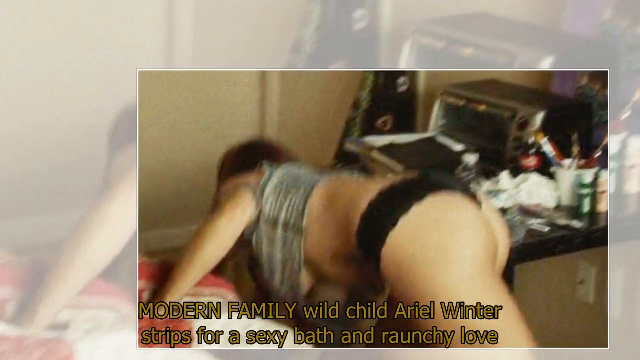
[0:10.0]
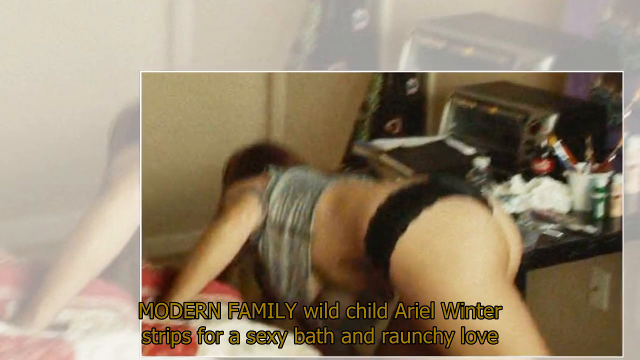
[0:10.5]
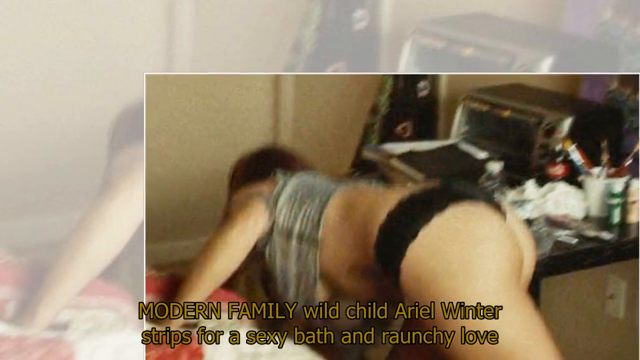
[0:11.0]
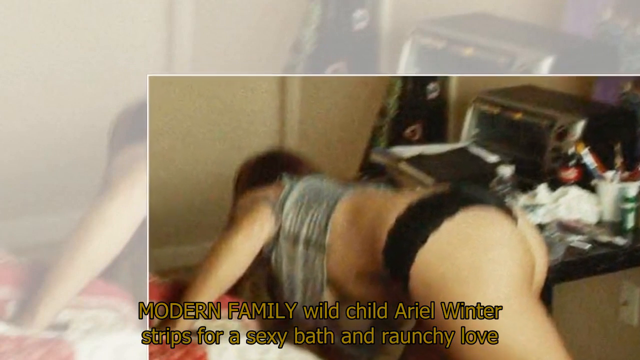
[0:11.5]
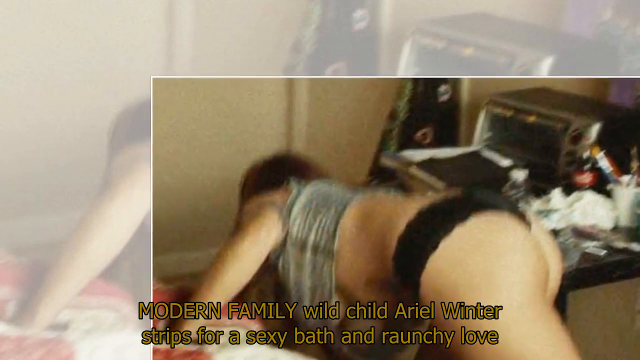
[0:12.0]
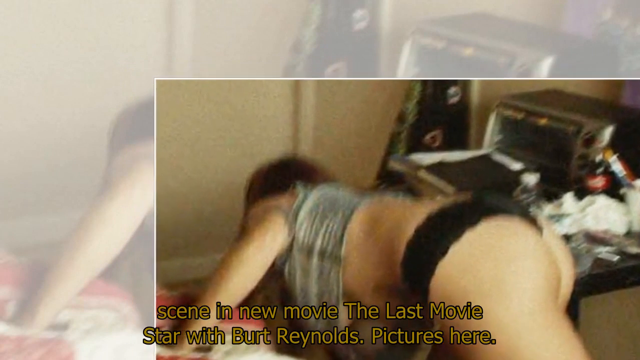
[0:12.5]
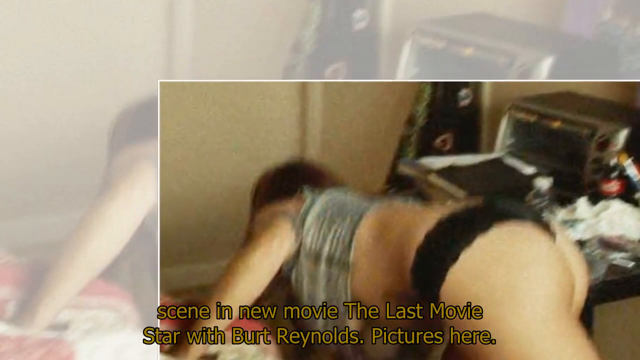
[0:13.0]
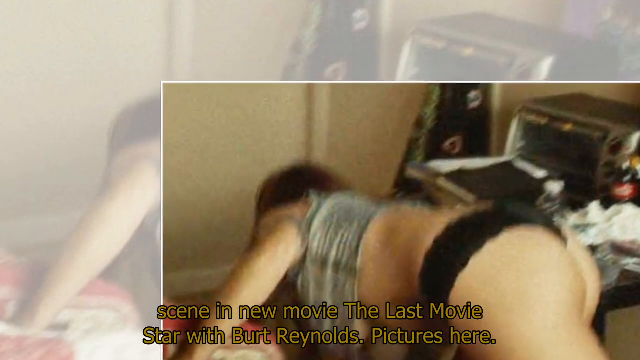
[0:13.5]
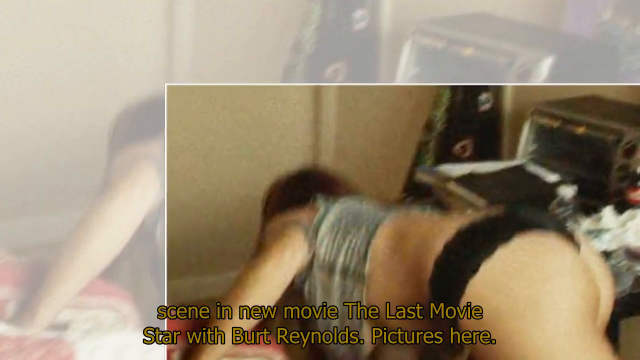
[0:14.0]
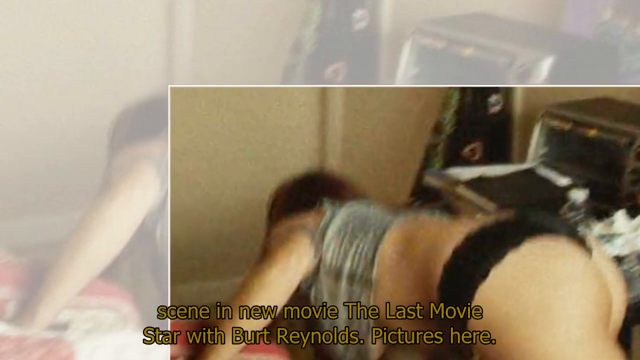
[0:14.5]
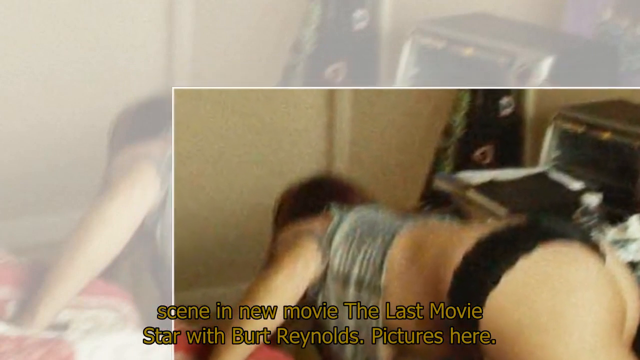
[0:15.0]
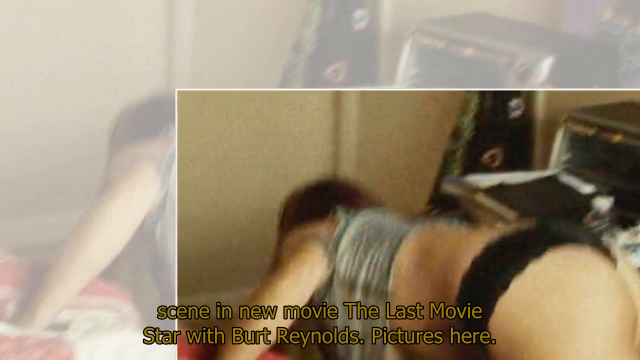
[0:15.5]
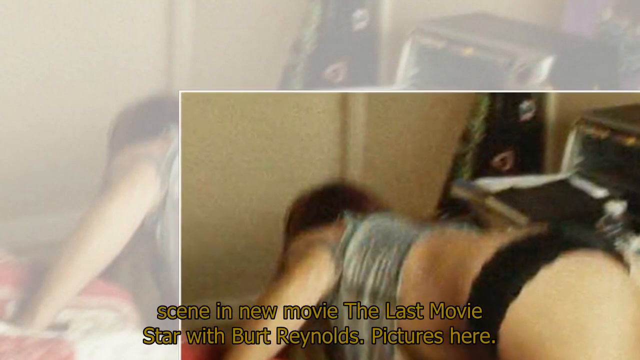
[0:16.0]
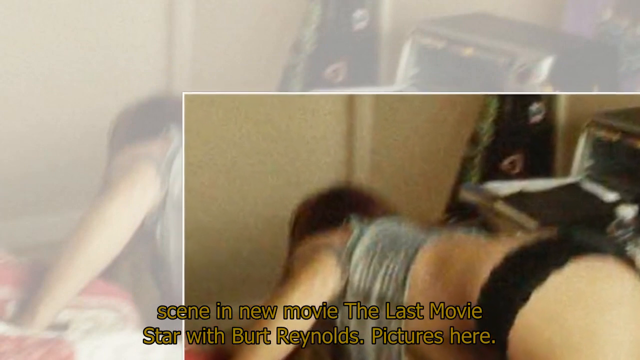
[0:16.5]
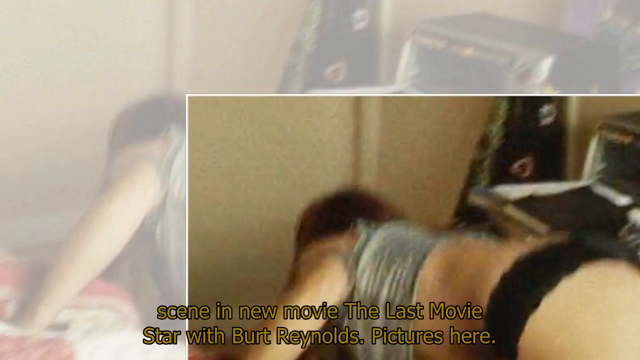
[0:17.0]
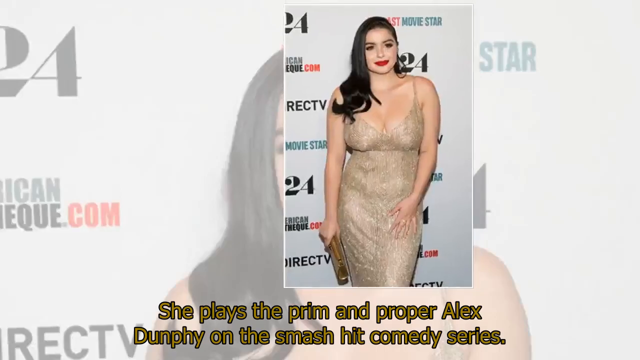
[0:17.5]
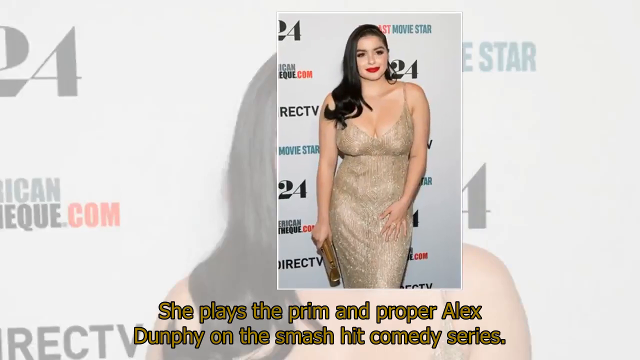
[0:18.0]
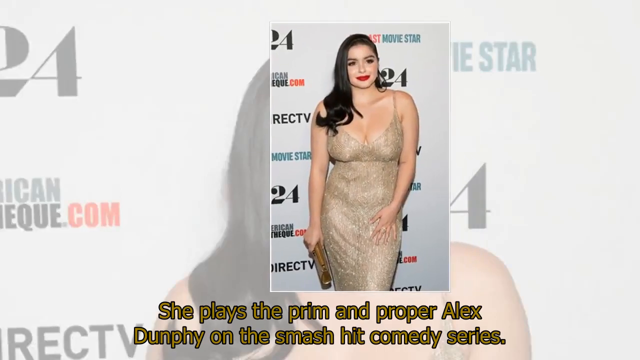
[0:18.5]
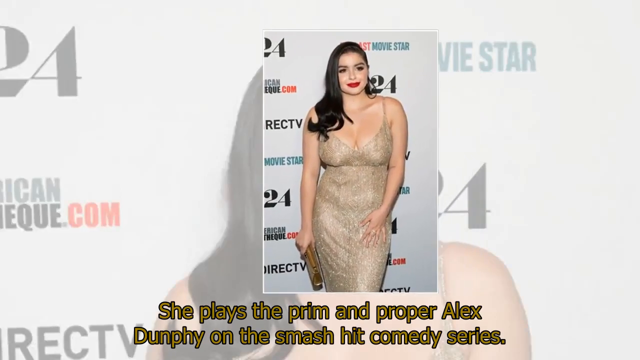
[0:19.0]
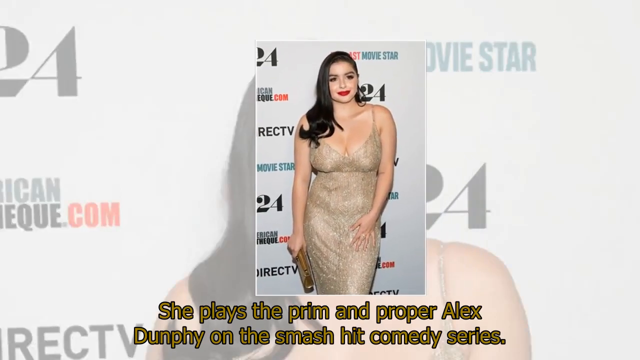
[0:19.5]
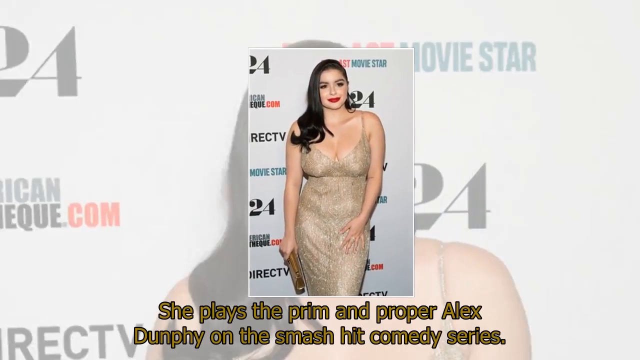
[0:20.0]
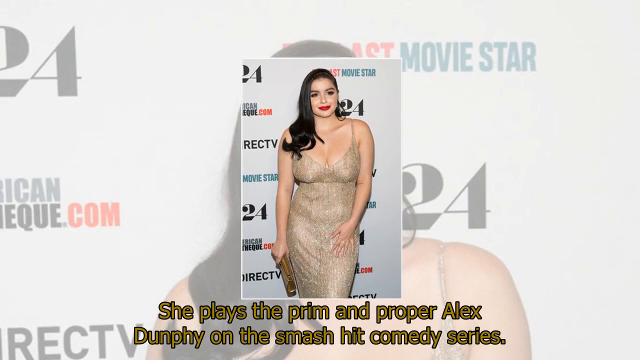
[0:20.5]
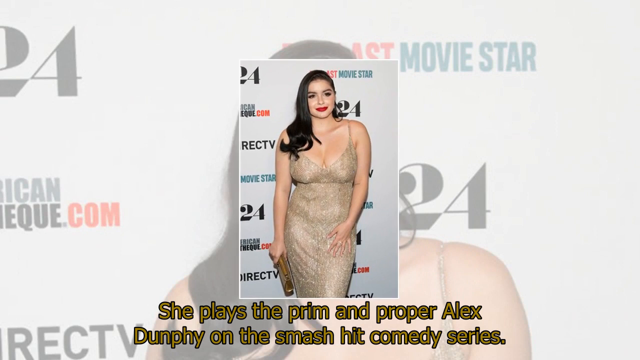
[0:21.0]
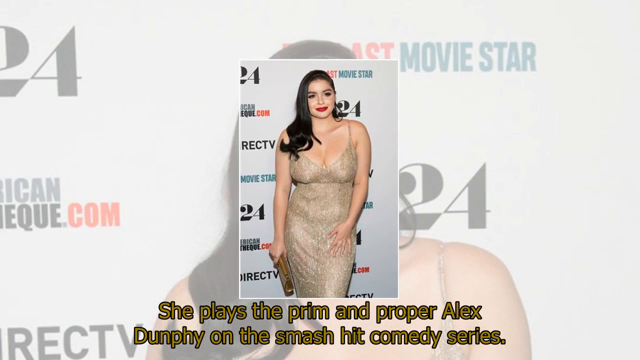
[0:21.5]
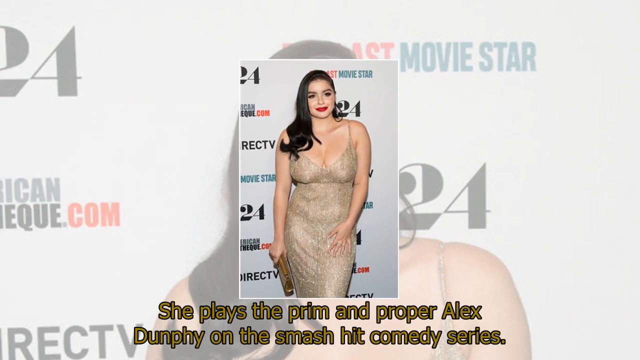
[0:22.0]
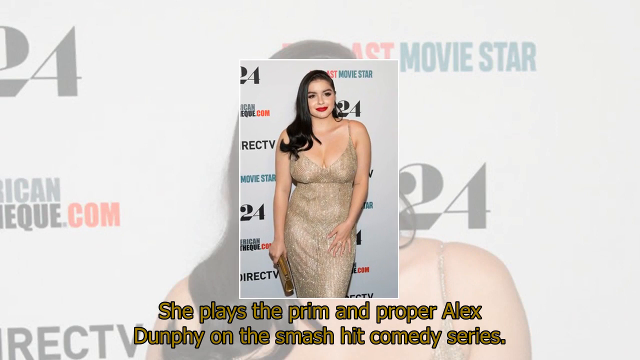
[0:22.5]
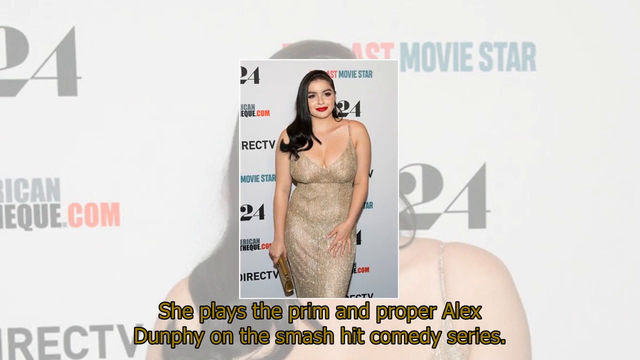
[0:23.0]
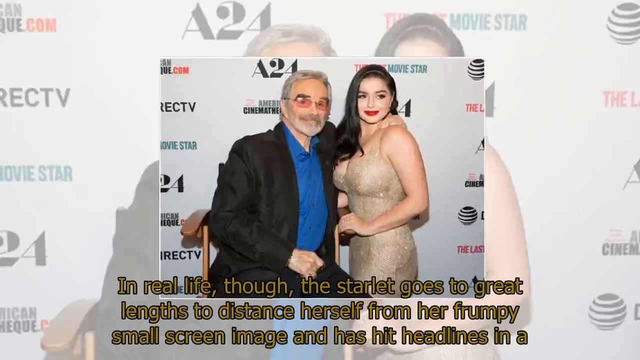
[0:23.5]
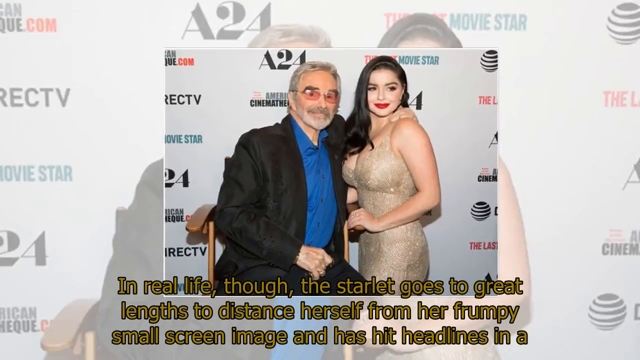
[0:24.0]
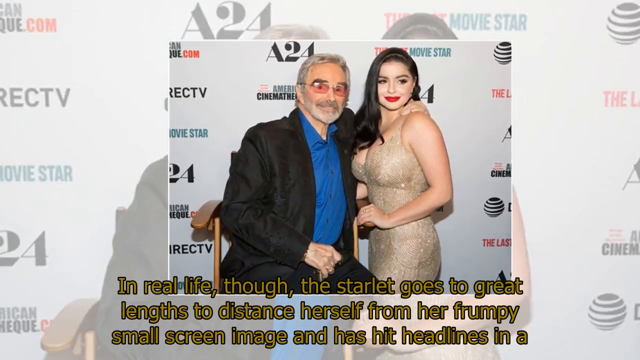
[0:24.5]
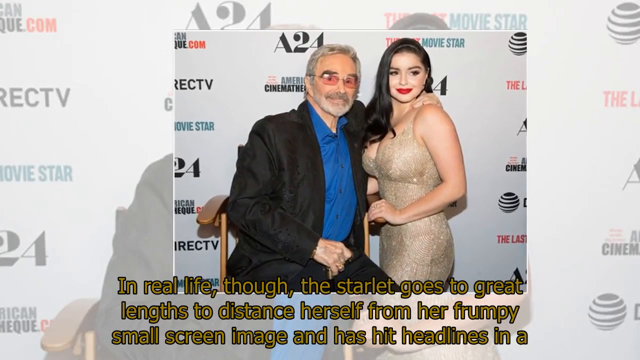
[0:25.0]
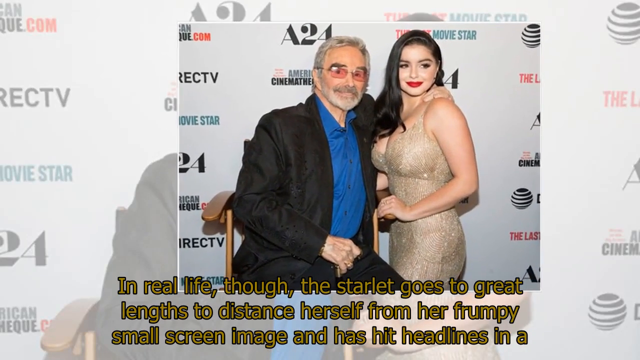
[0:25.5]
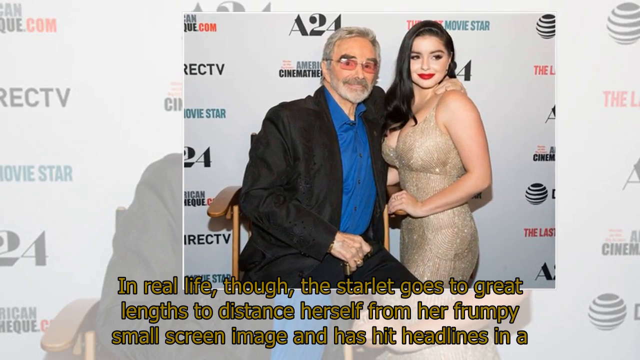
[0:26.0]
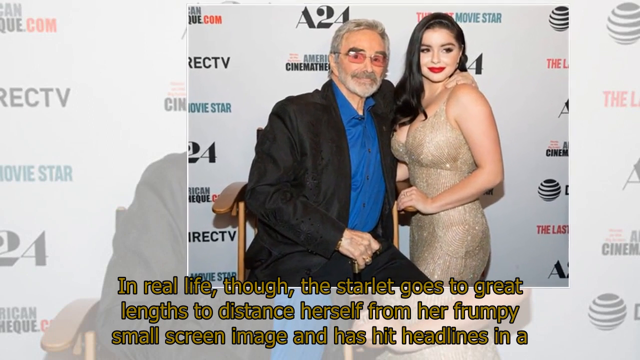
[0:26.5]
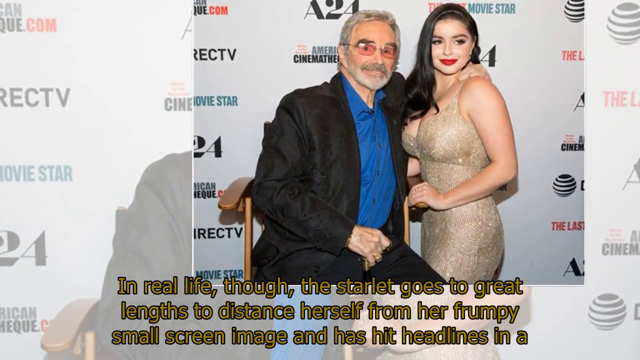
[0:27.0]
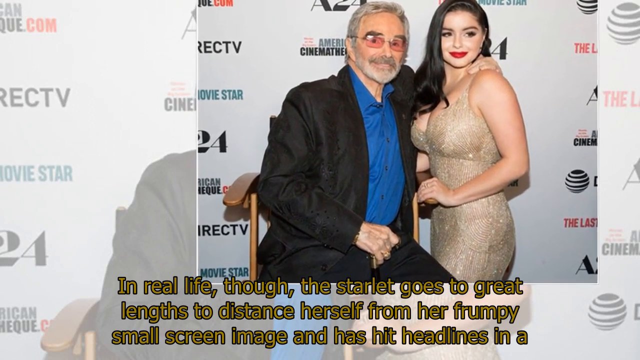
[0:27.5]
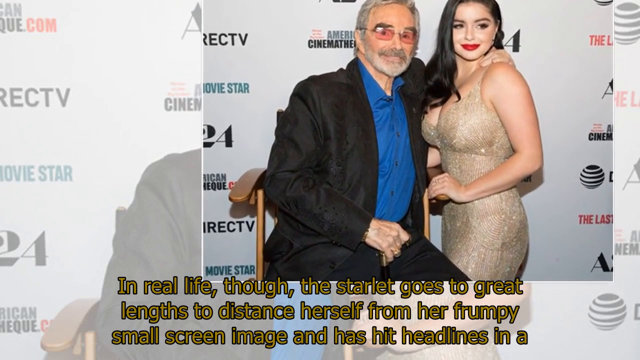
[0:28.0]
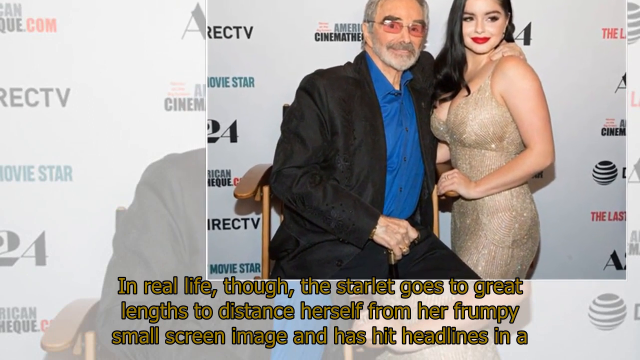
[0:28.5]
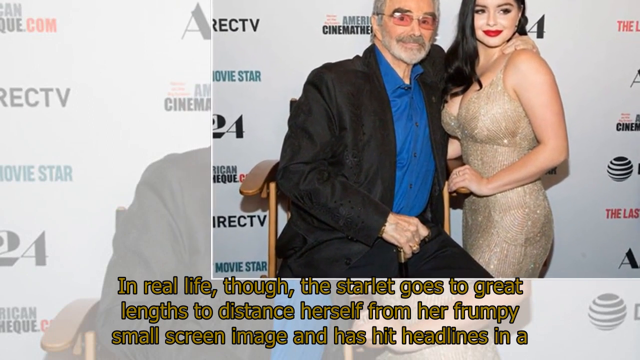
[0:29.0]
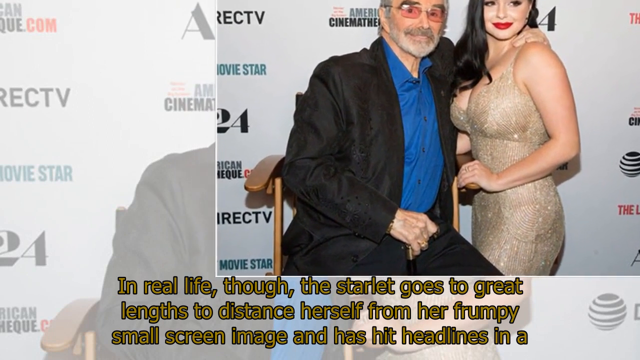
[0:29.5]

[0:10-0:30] Photos of actress Ariel Winter from her latest movie with Burt Reynolds continue. One photo shows her alone, standing, in a goldish dress with makeup and red lipstick. Another shows her with an old man wearing spectacles, a black suit and a blue shirt. The photo of her bent down with her breast visible appears as well. Two people are seen in the video.